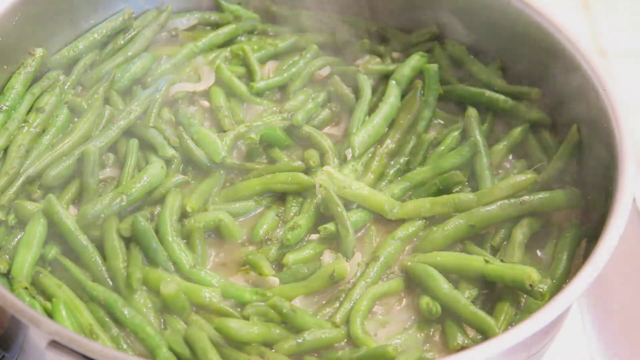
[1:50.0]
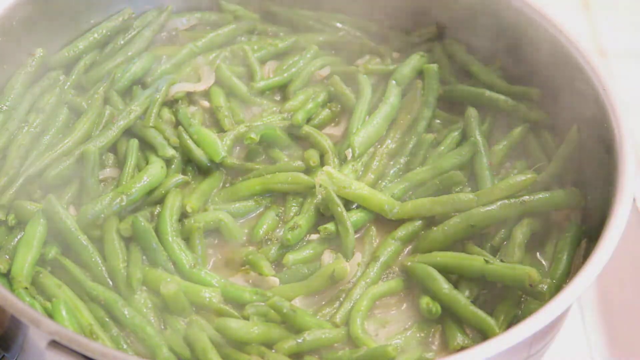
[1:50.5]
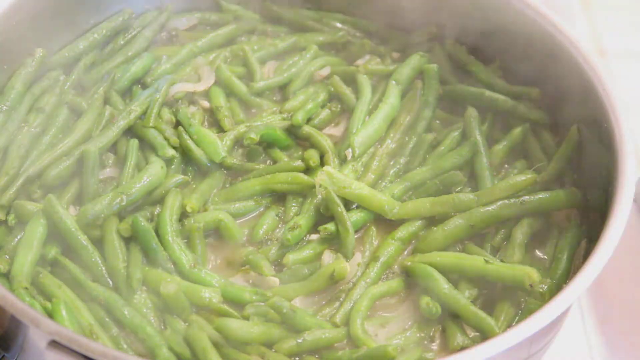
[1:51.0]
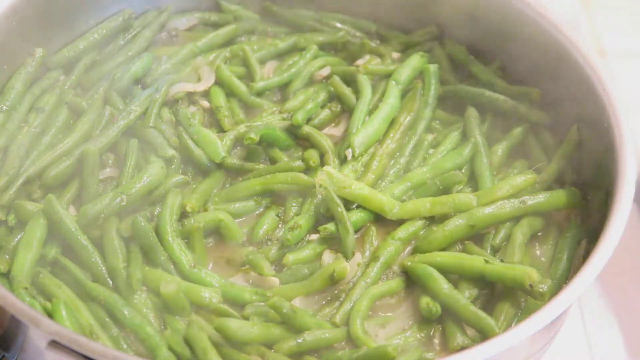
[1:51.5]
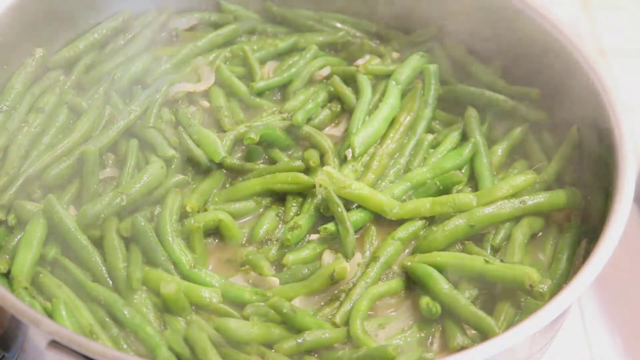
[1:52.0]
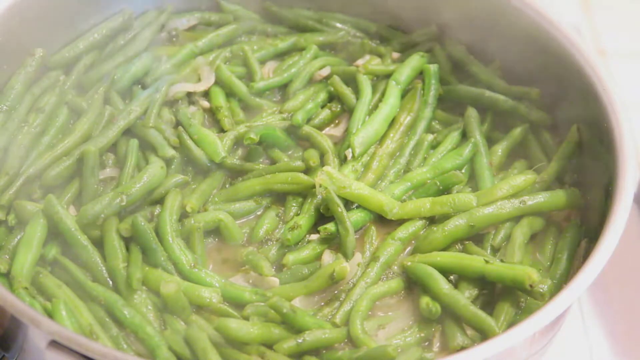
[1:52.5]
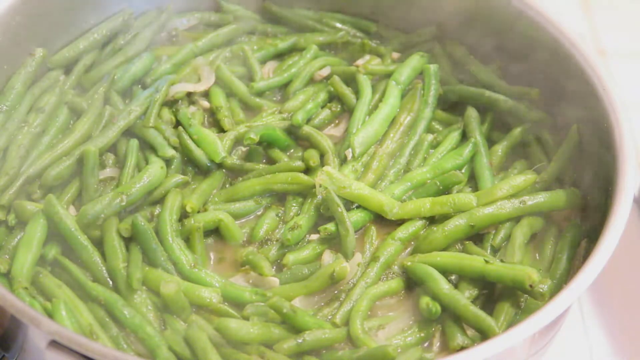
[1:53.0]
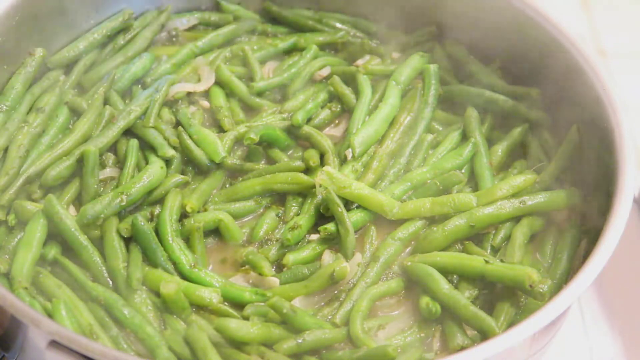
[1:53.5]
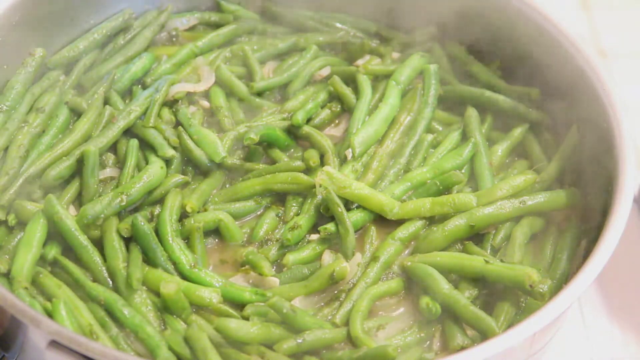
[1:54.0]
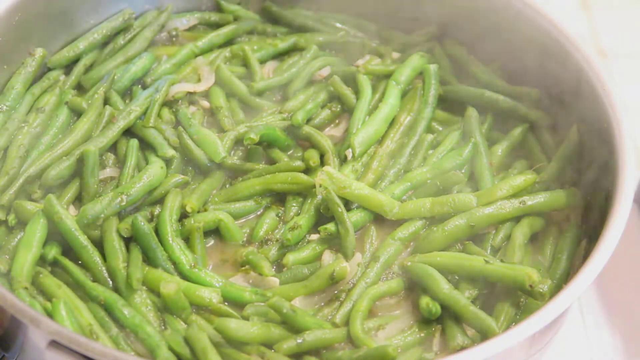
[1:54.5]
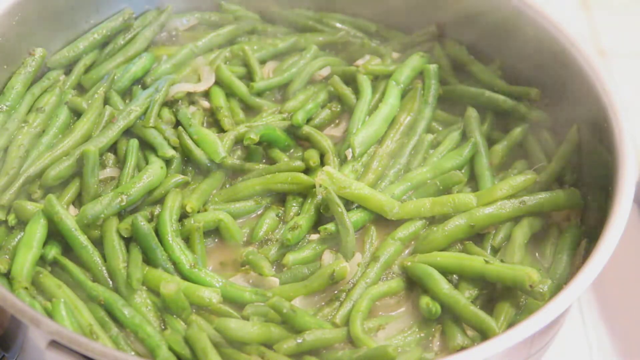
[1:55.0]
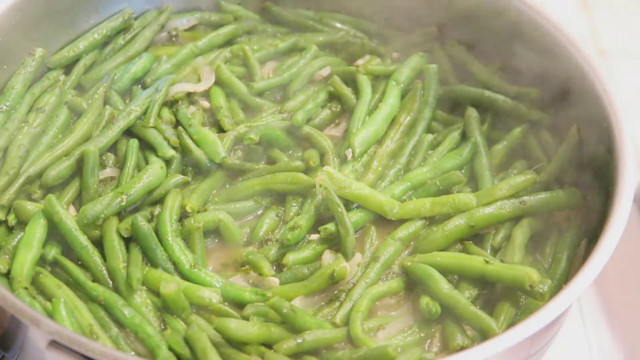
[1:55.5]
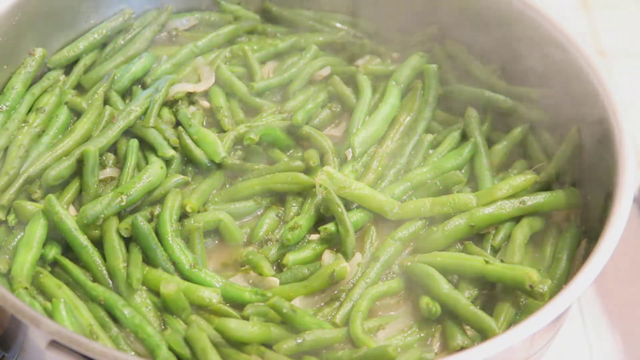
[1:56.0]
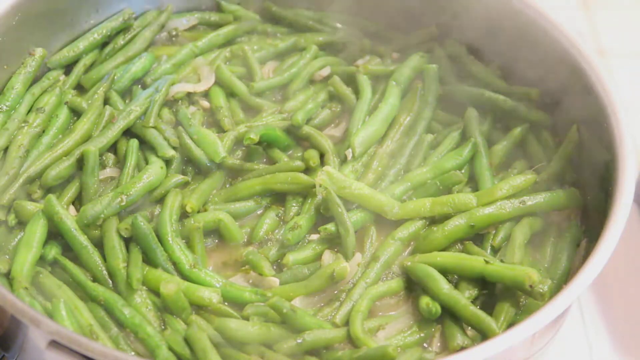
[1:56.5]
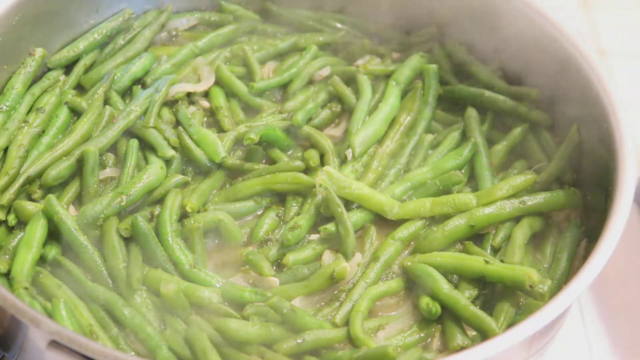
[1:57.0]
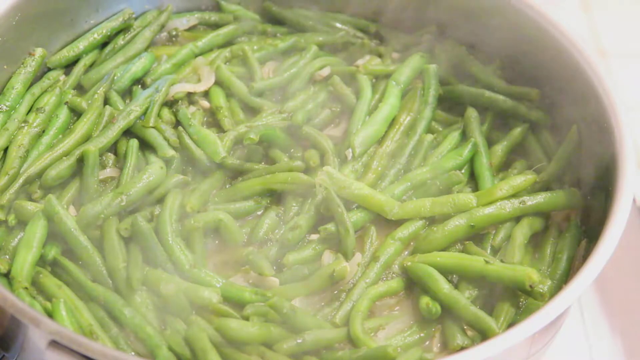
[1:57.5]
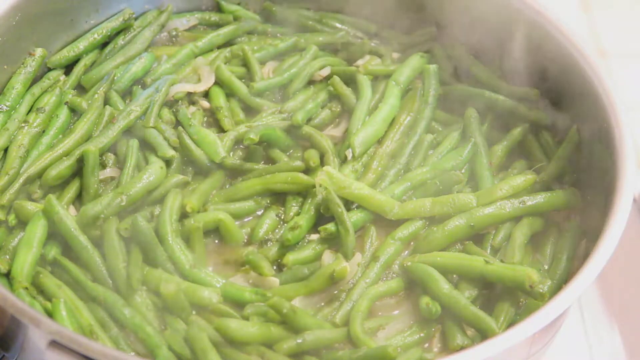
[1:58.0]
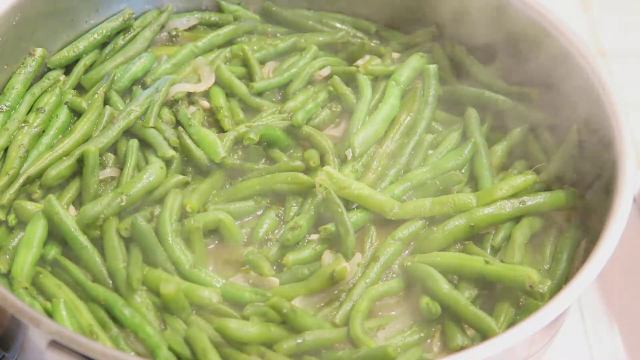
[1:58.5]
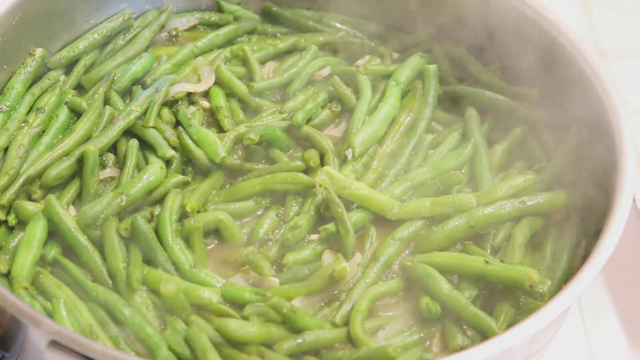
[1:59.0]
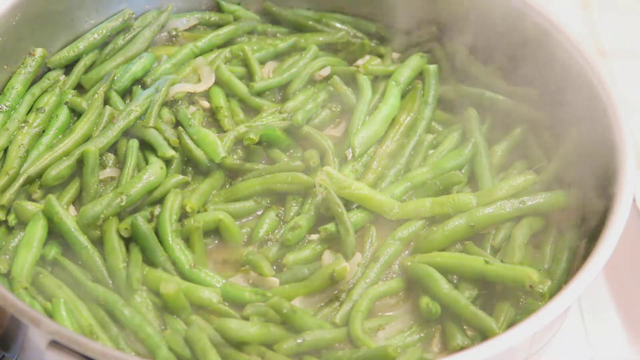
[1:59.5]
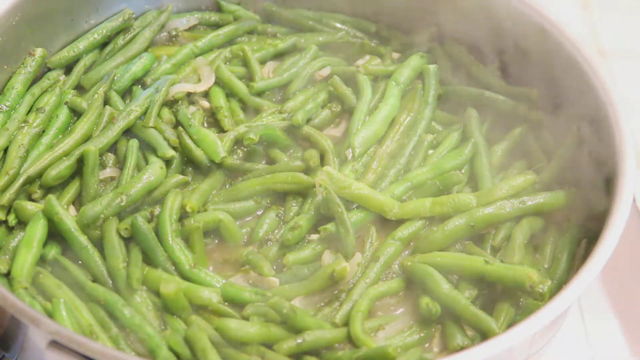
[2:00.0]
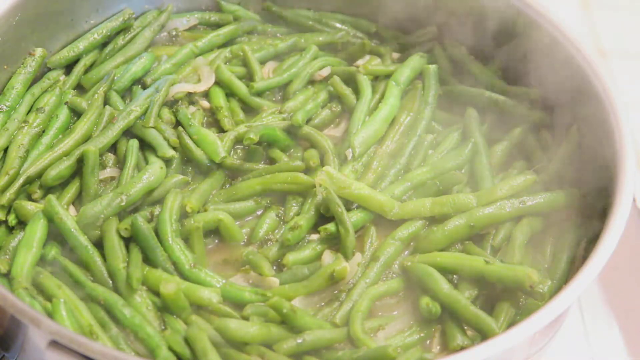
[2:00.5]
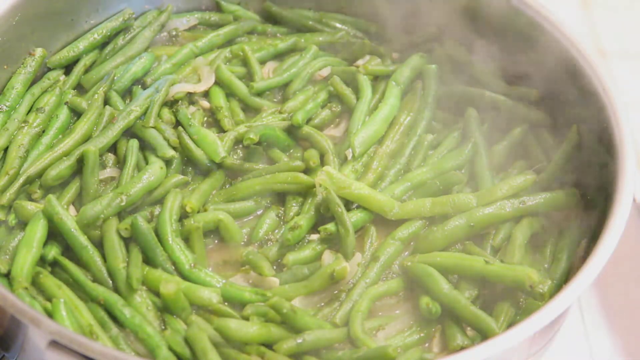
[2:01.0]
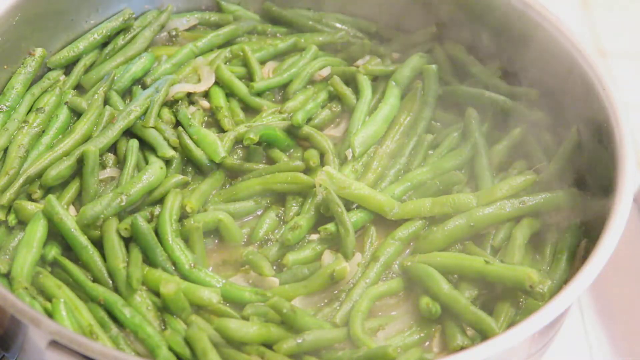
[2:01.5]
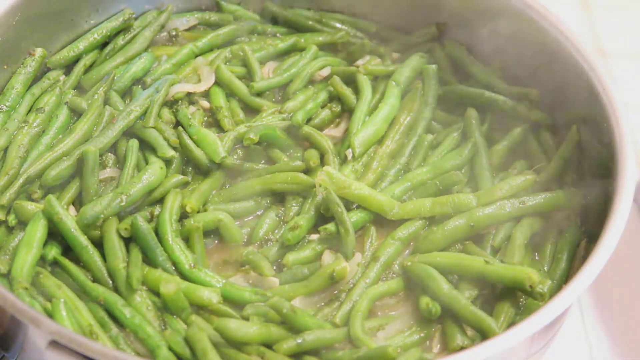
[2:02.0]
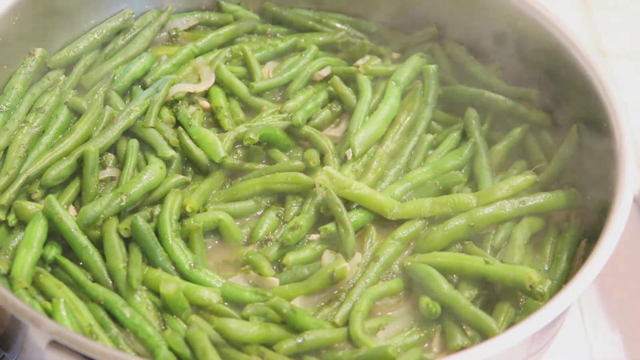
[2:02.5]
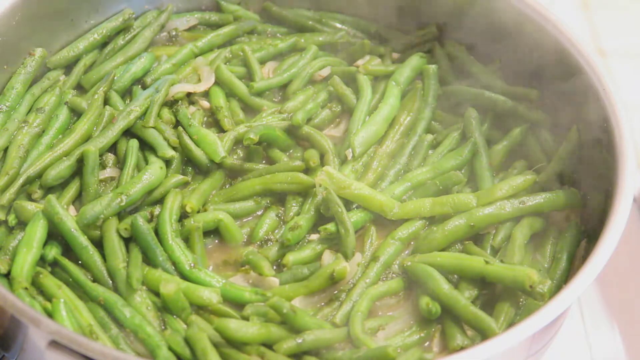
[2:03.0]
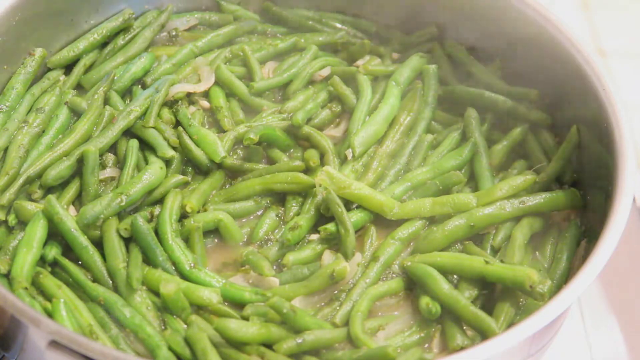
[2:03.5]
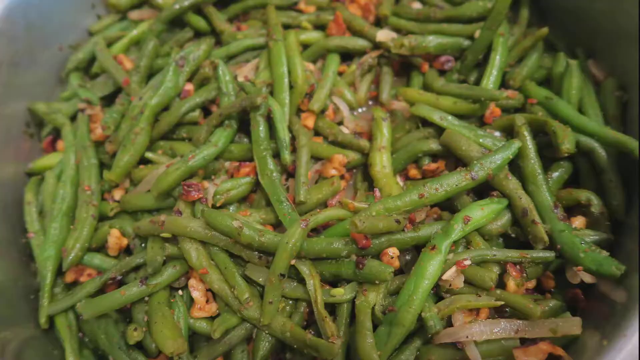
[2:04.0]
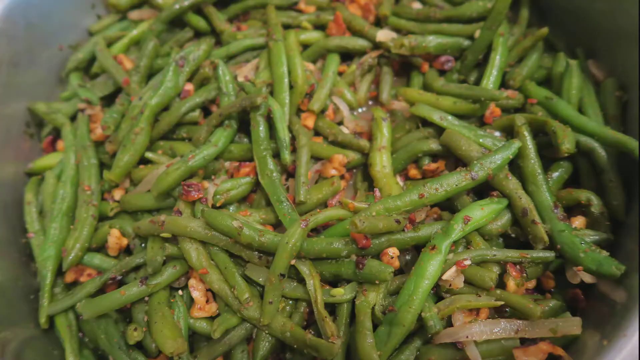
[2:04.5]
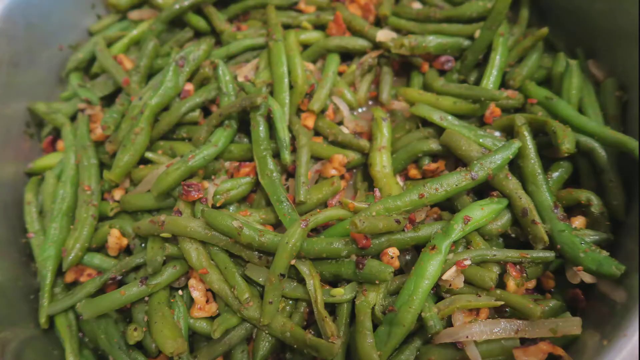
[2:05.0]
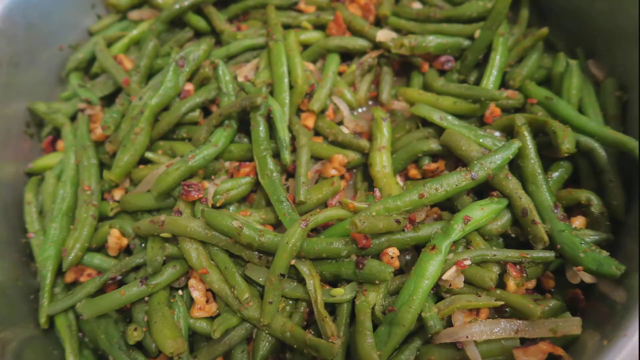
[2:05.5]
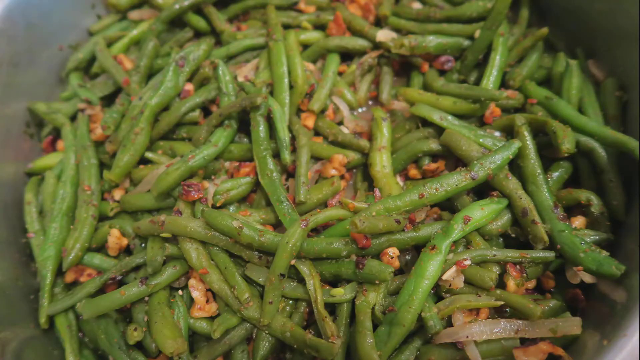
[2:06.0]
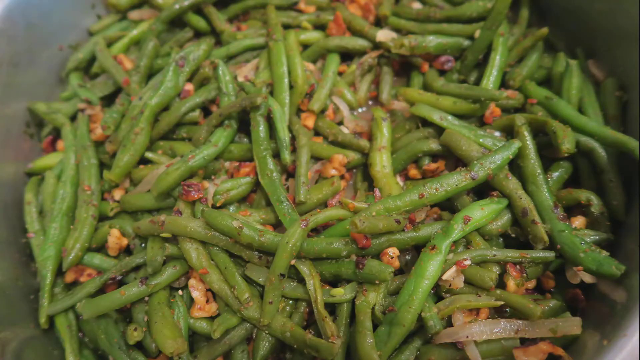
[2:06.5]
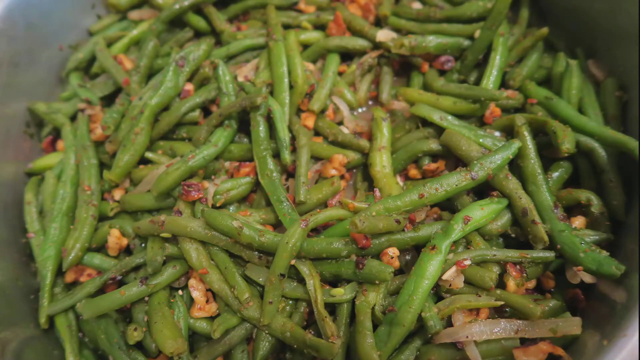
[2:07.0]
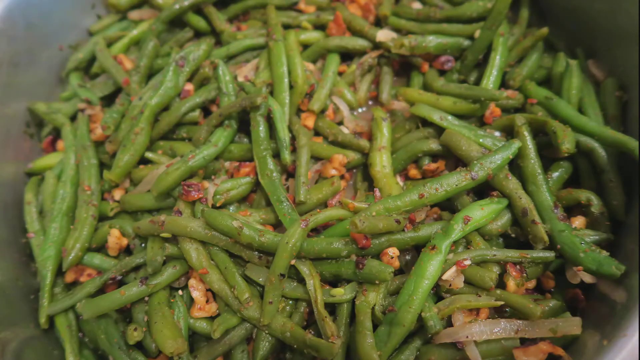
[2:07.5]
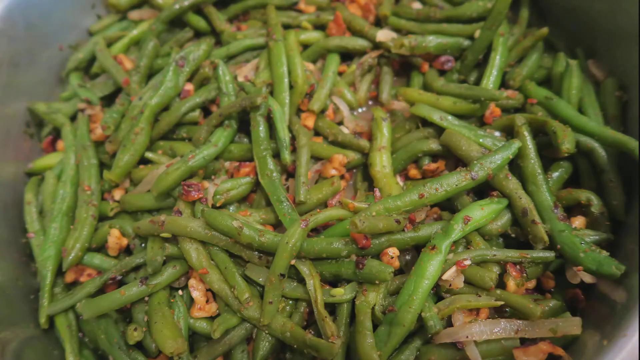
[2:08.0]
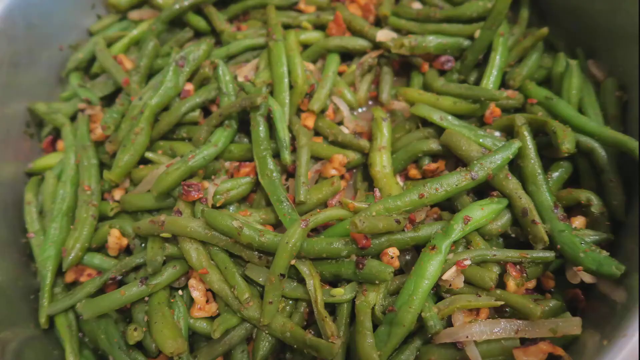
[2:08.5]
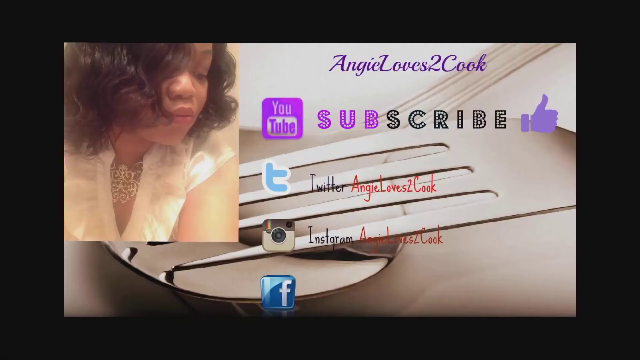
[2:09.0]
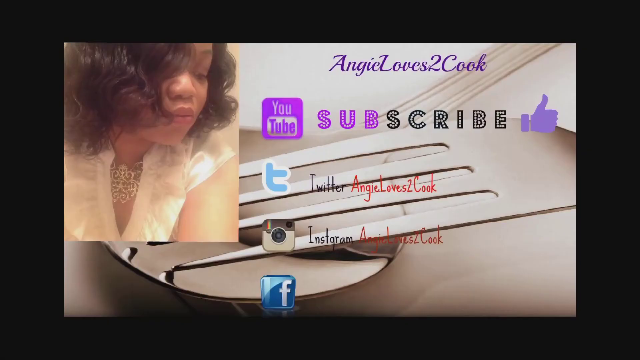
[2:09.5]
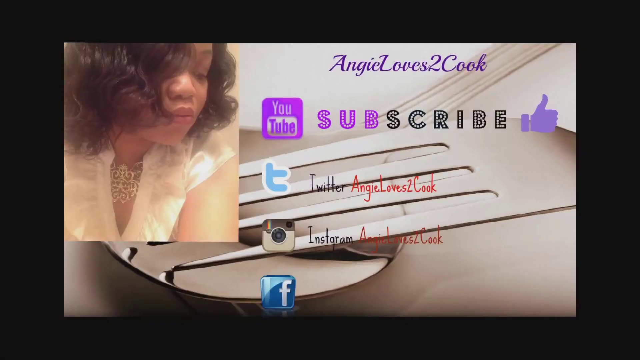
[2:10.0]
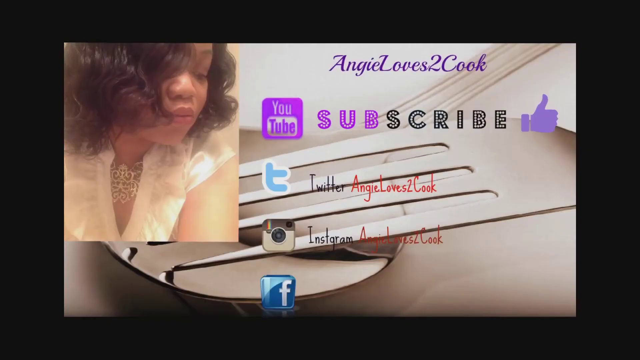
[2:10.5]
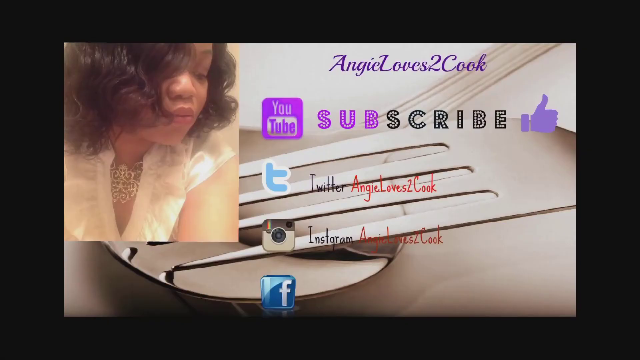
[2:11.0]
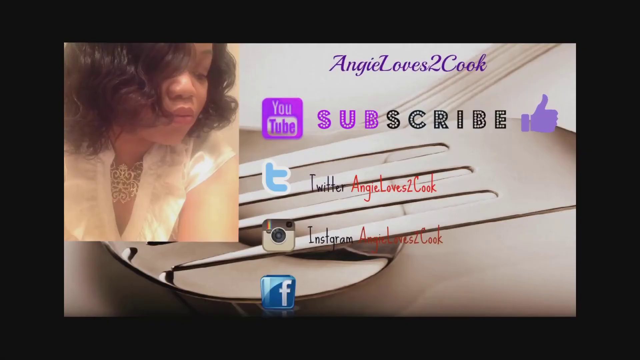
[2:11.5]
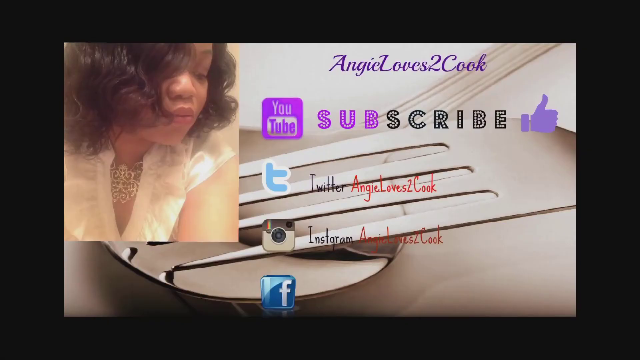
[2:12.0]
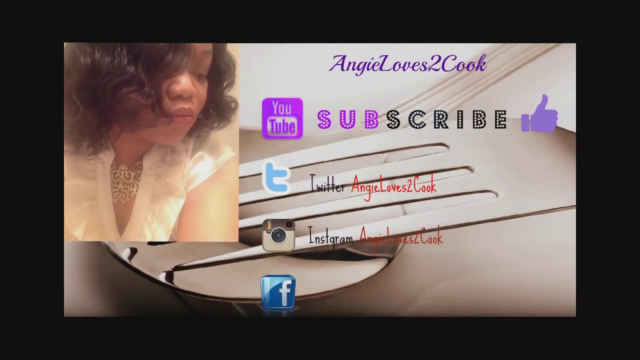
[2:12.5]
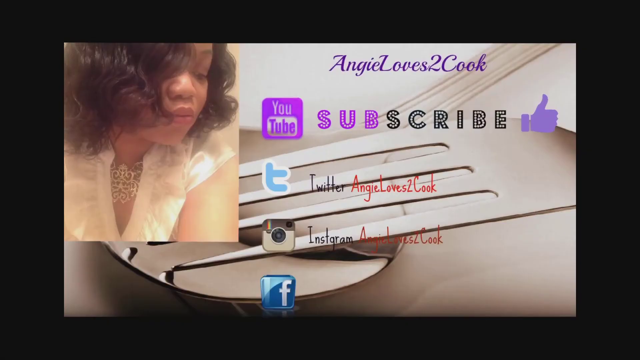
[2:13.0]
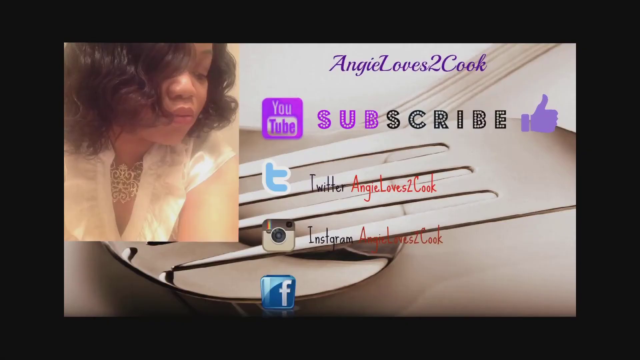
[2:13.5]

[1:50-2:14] After the spices are added to the green beans, the pan is steaming and boiling as the contents are mixed. The green beans in the pot are turning a little brownish, and they are brought to a boil.